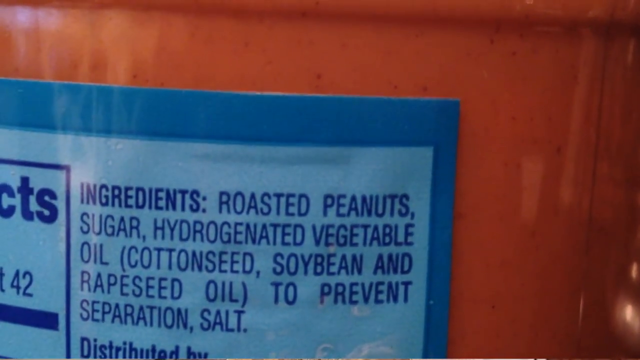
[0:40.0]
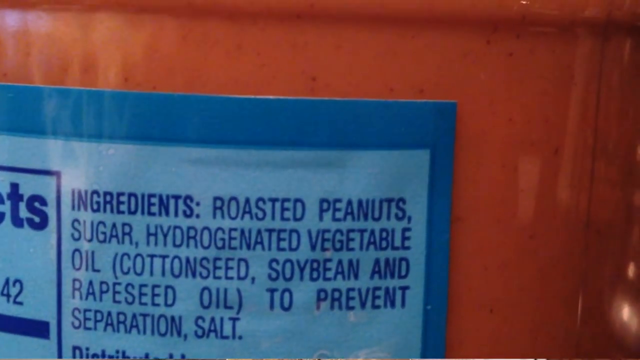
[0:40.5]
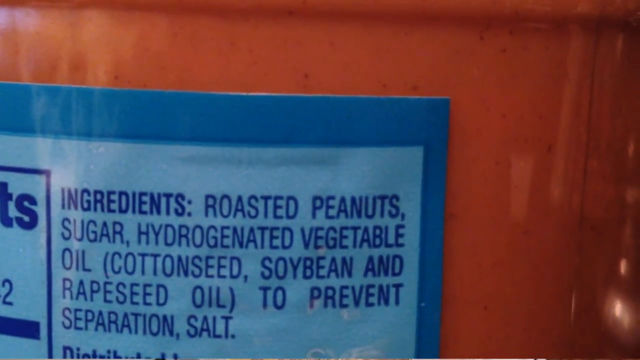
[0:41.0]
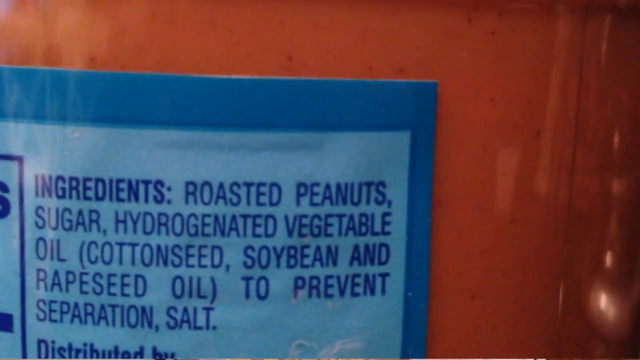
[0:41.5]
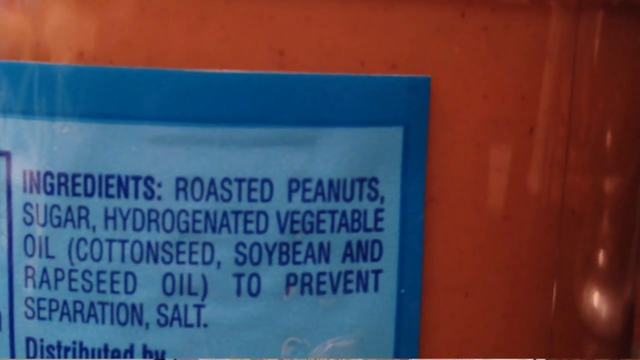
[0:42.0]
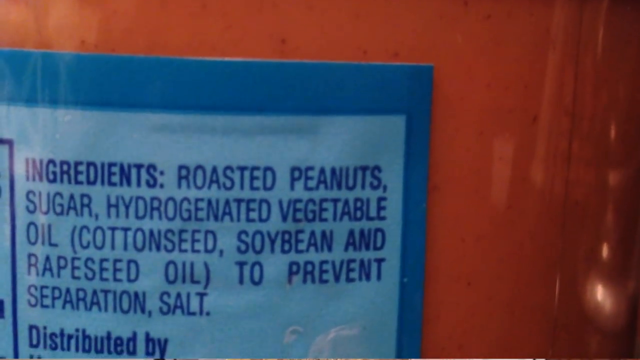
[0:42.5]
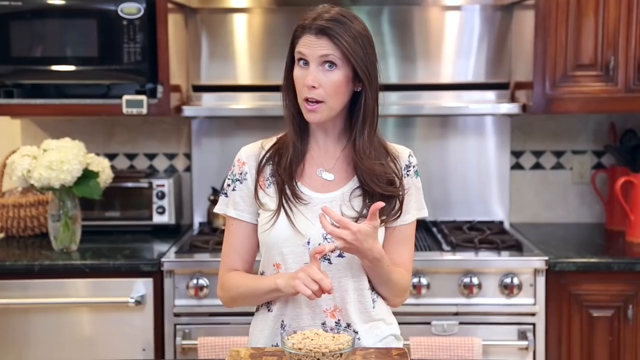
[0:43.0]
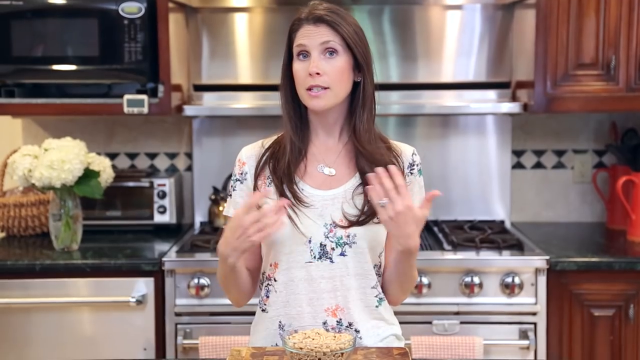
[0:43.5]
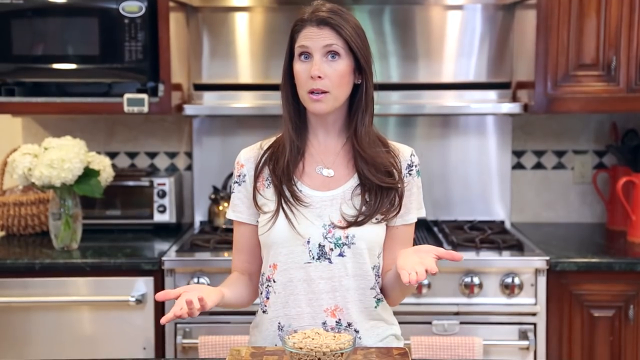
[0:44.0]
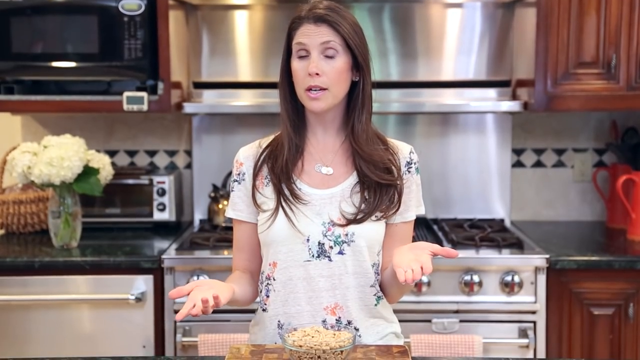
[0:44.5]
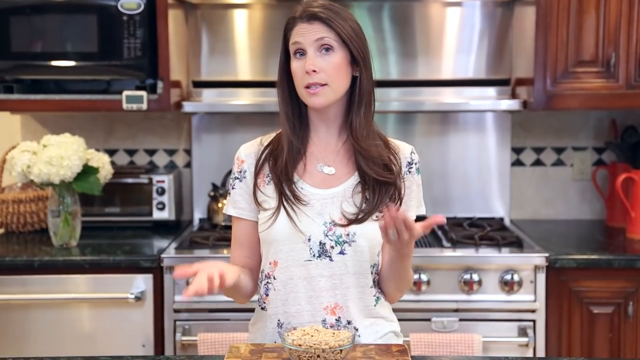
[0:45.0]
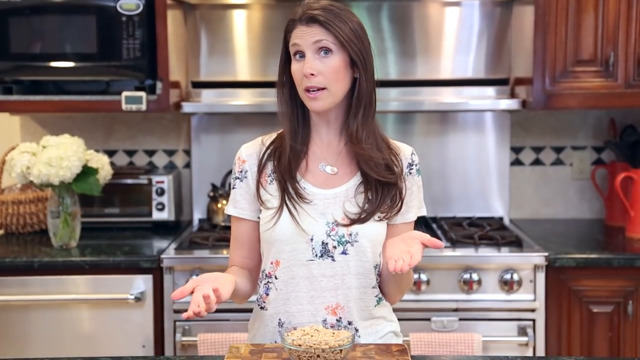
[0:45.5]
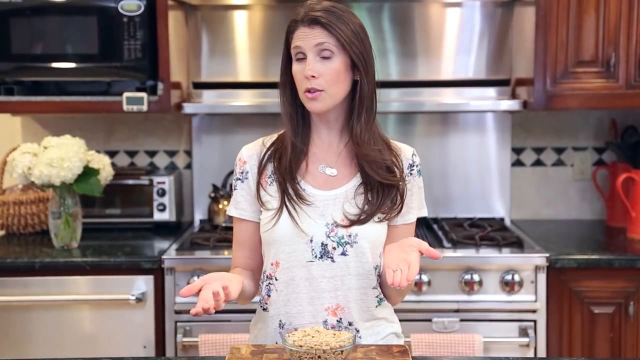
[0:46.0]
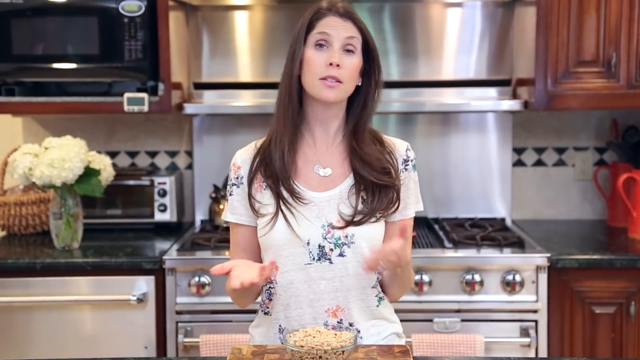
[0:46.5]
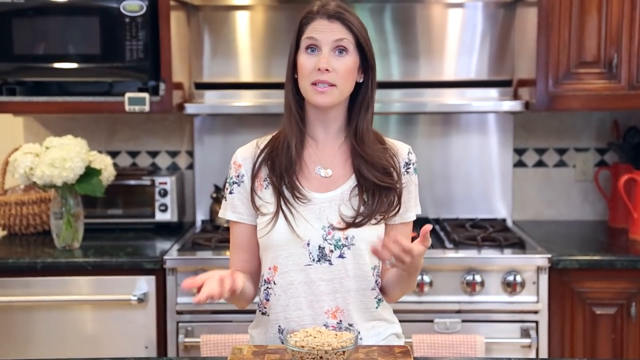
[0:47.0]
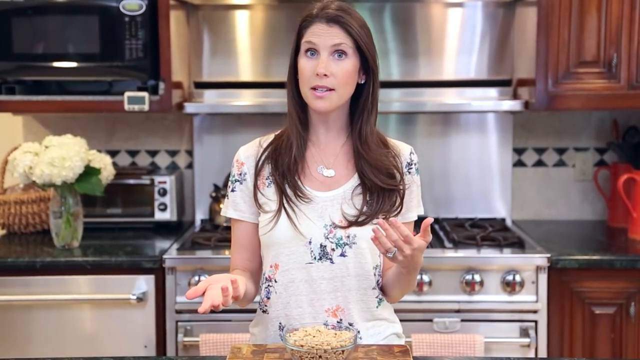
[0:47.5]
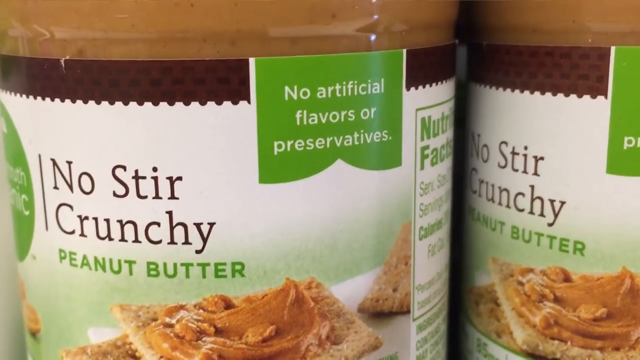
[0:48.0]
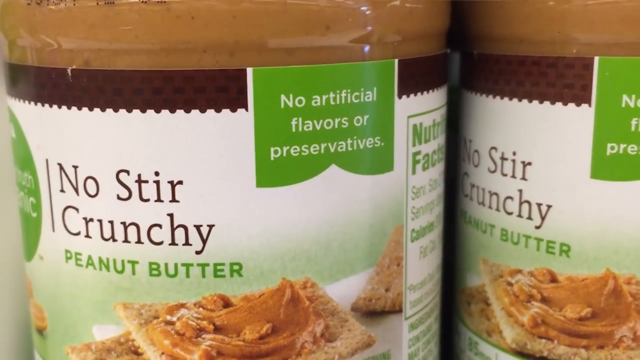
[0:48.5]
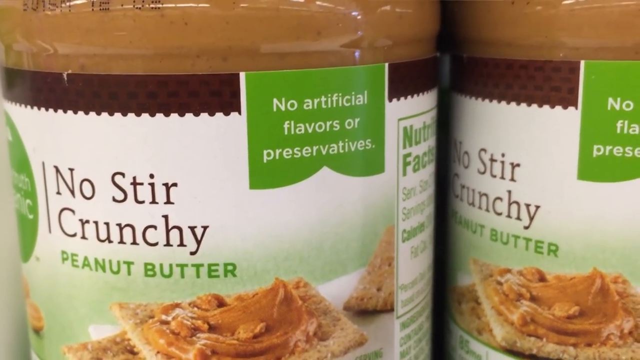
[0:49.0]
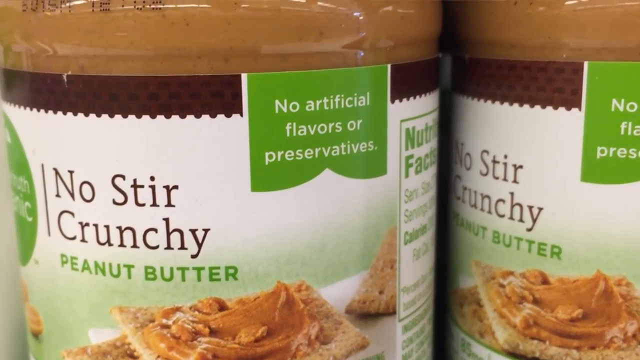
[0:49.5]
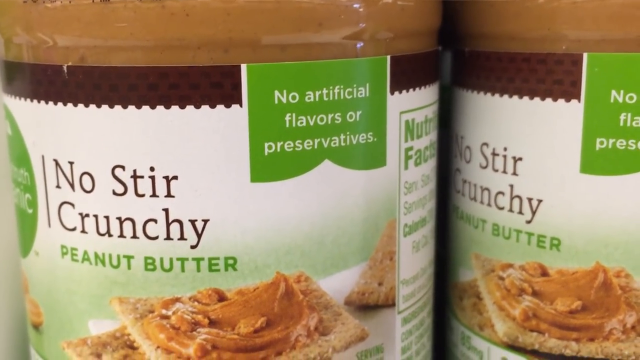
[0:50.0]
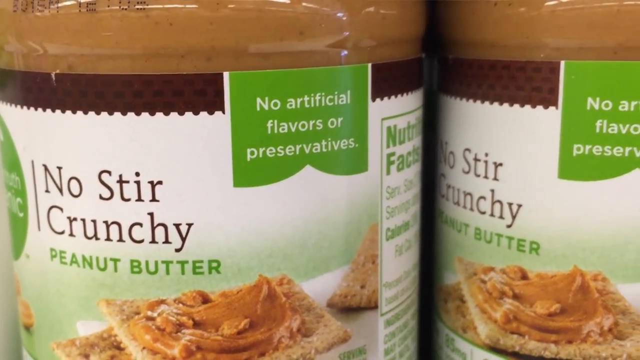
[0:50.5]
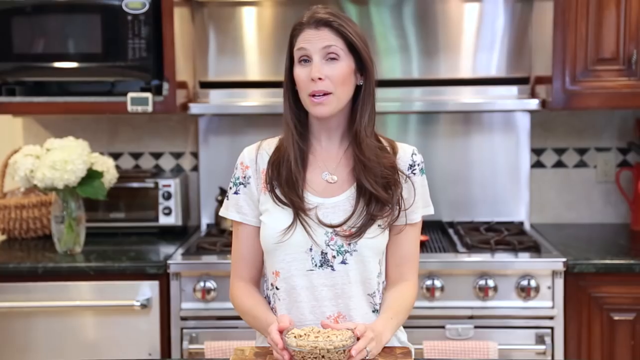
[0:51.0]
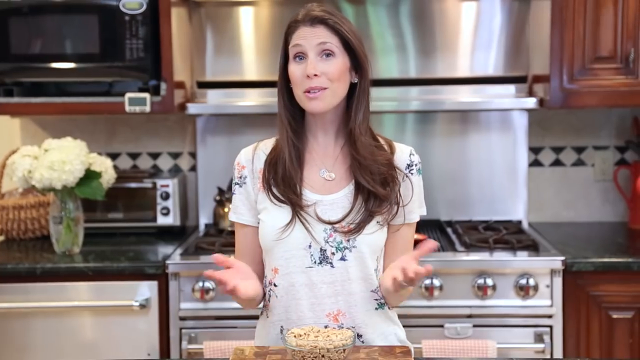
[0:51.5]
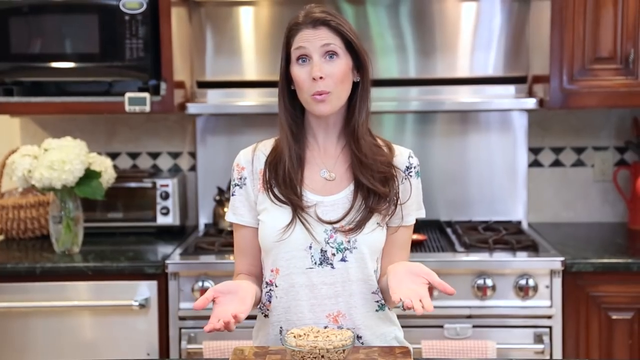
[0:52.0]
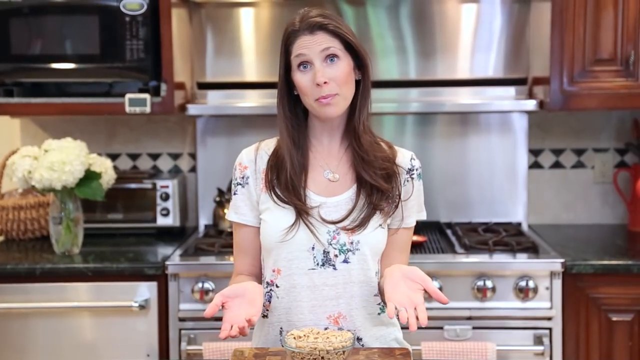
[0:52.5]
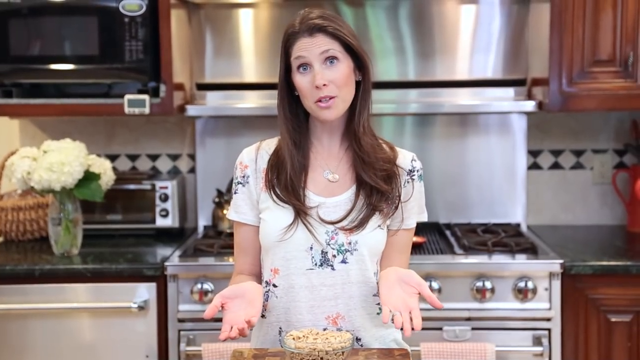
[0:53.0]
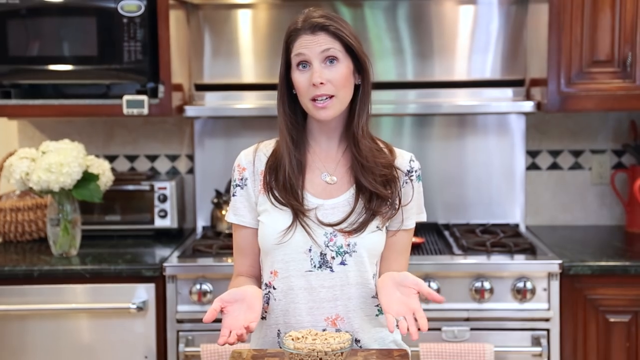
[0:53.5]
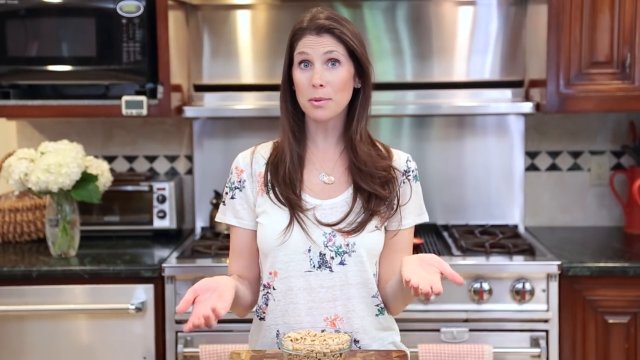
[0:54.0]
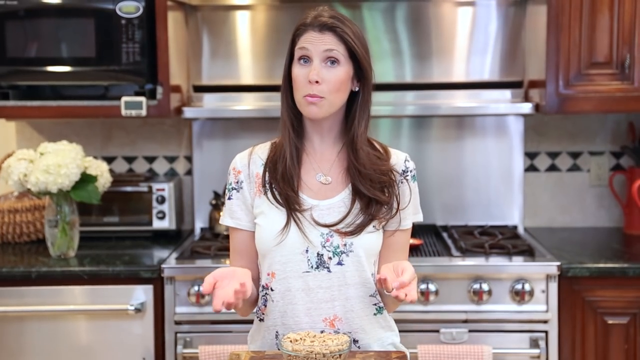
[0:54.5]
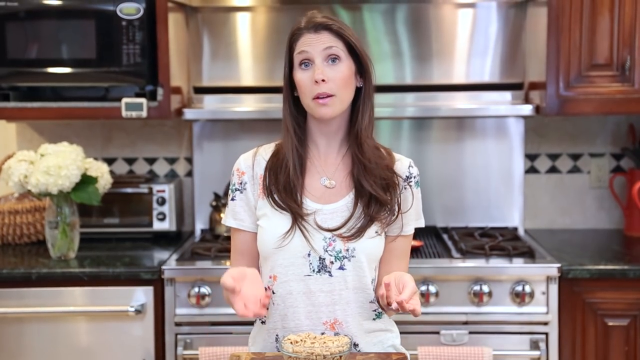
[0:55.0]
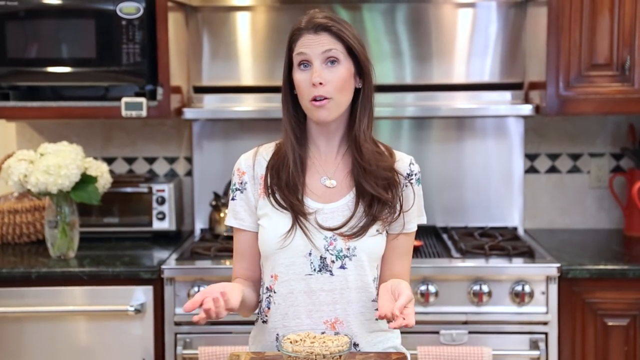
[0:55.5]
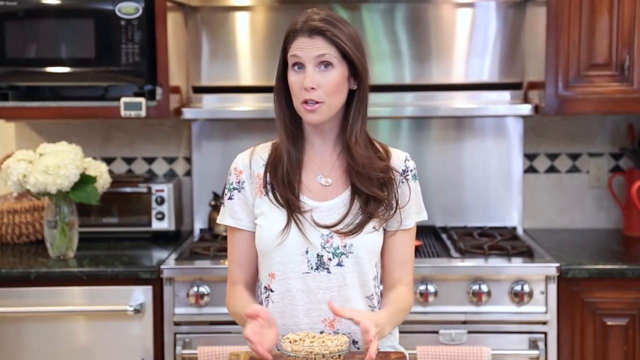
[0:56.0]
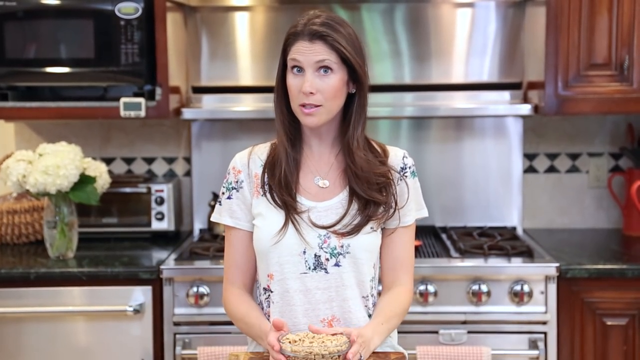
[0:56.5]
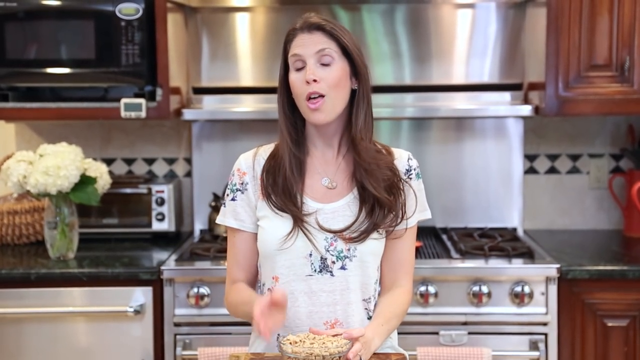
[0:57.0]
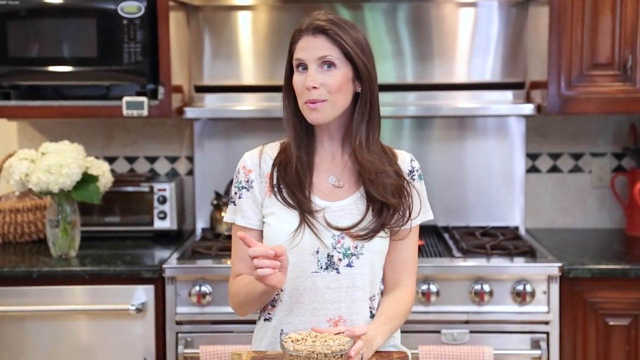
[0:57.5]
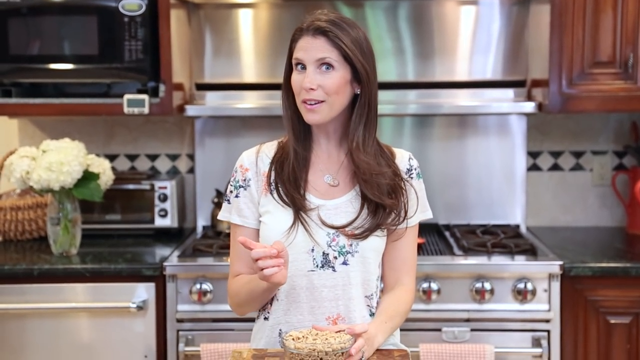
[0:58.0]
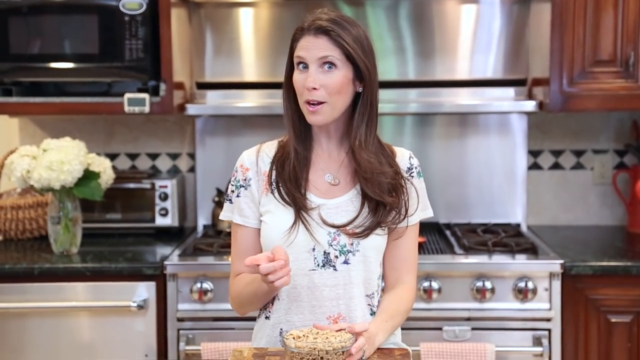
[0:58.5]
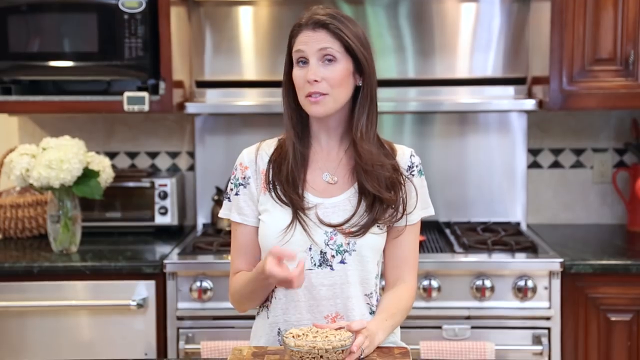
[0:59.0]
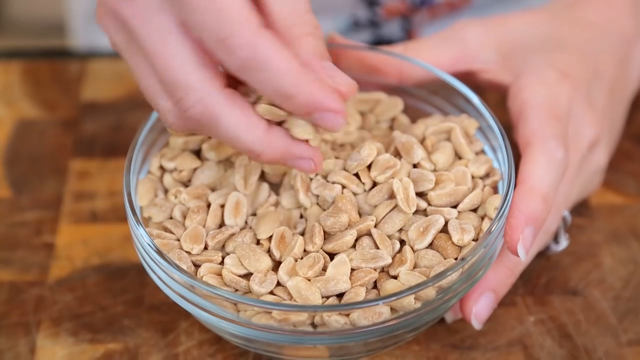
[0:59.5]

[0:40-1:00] What appear to be the ingredients of a product are shown zoomed in, written in bold, dark blue letters, including "roasted peanuts, sugar, hydrogenated vegetable oil" and "cotton seed, soybean, and rapeseed oil to prevent separation". The video then returns to the woman in the white t-shirt with floral designs. She is describing something, her hands and body moving as she explains. Both hands are raised in the air, one up and one down, and she keeps moving them alternately, as if she may be comparing something. Next, a product is shown with the text "no artificial flavors or preservation" and "crunchy peanut butter".